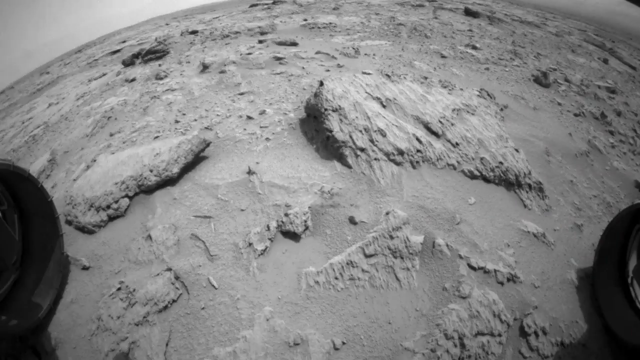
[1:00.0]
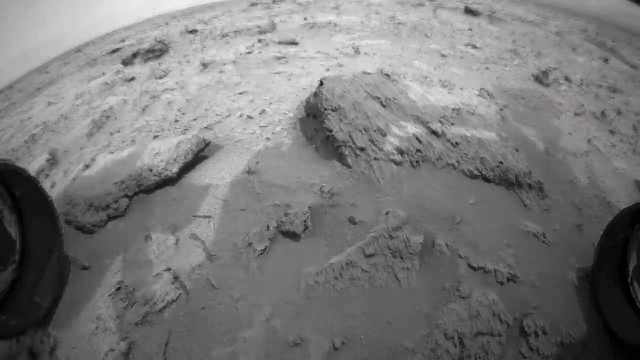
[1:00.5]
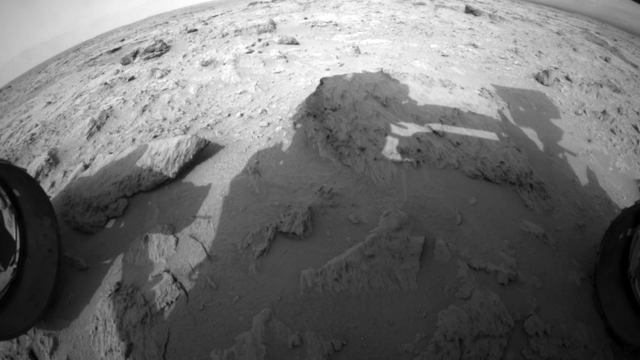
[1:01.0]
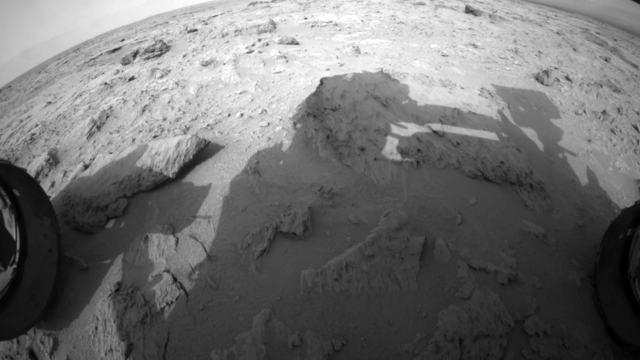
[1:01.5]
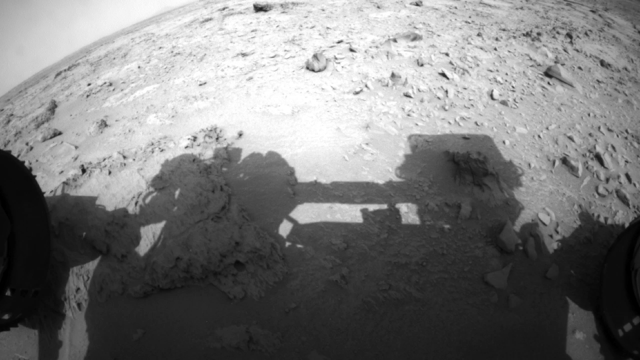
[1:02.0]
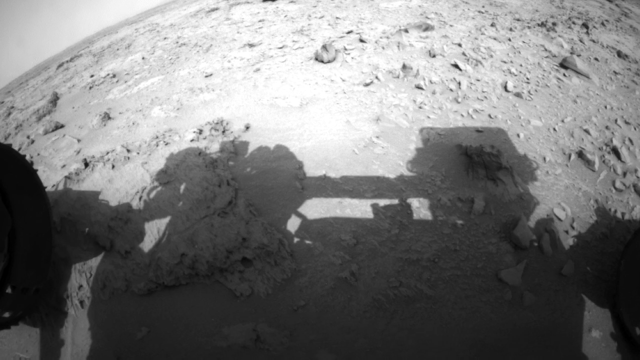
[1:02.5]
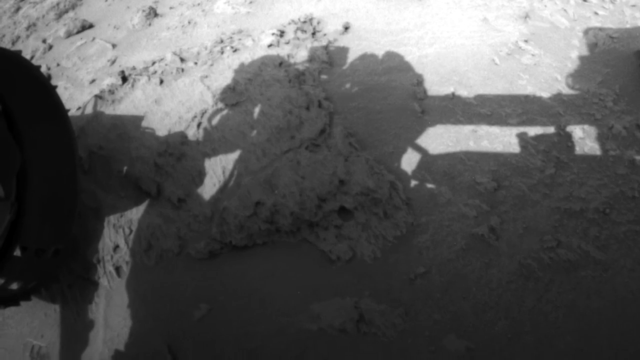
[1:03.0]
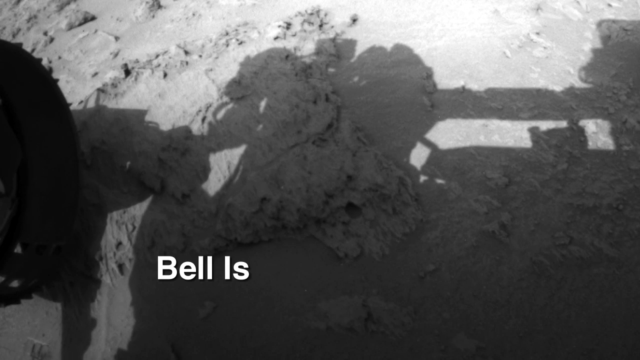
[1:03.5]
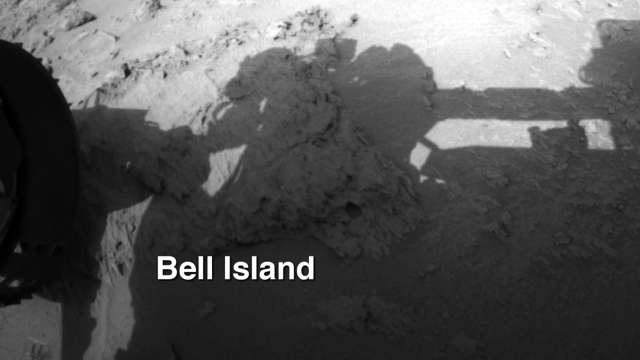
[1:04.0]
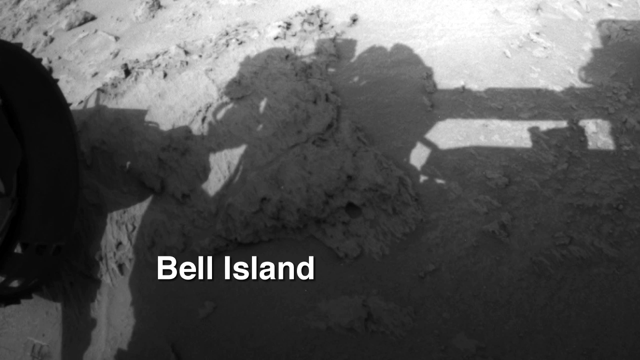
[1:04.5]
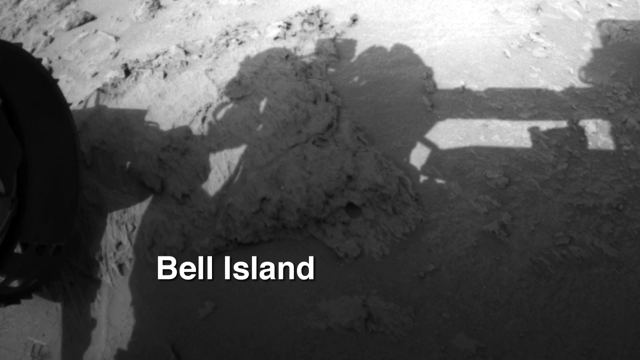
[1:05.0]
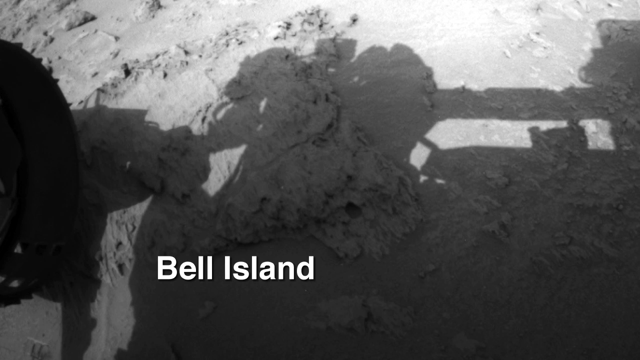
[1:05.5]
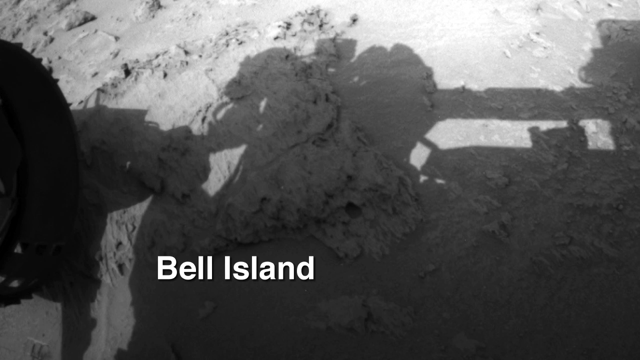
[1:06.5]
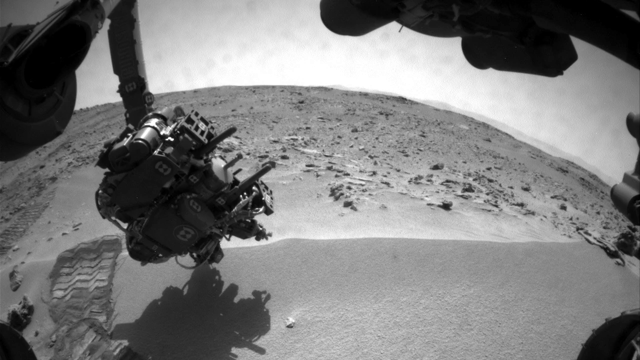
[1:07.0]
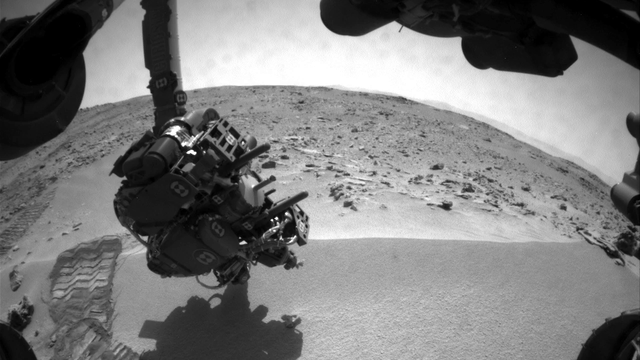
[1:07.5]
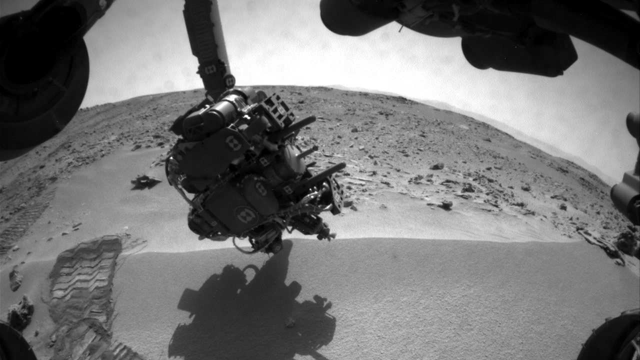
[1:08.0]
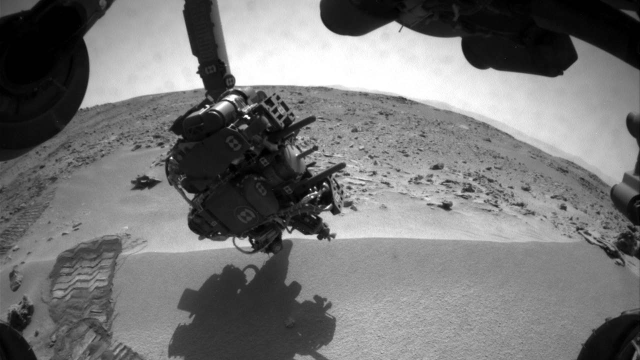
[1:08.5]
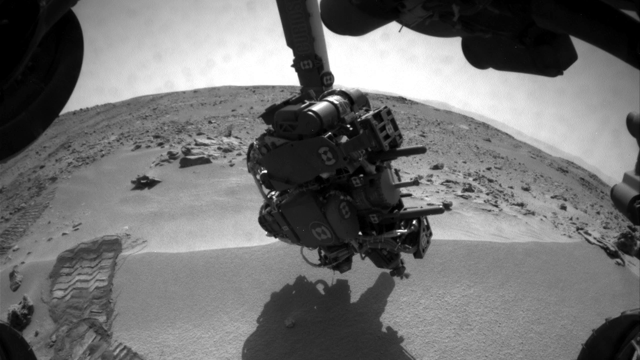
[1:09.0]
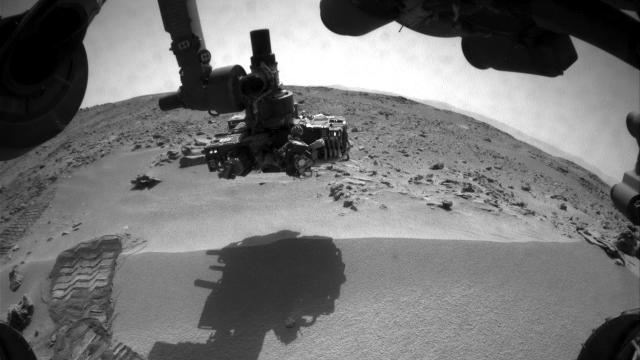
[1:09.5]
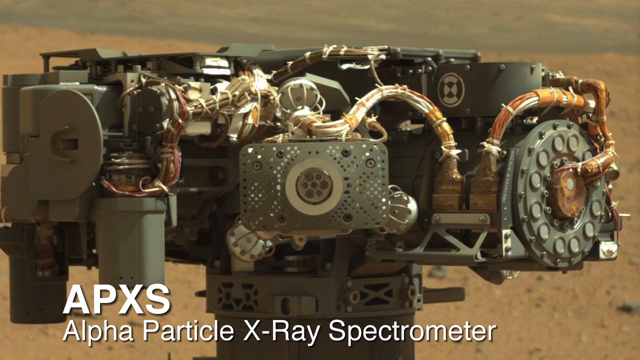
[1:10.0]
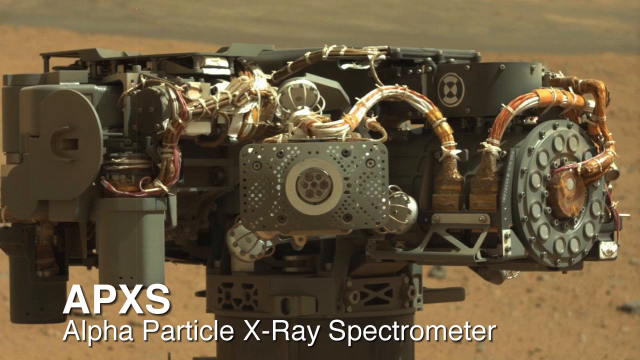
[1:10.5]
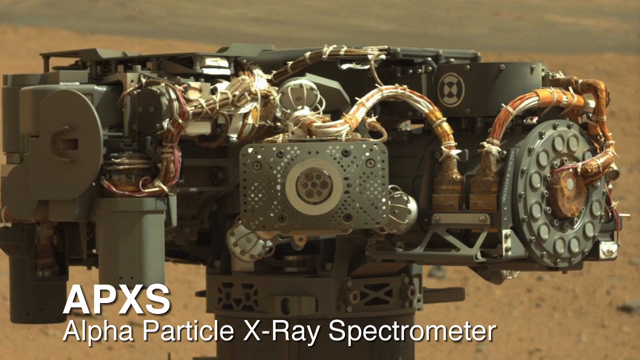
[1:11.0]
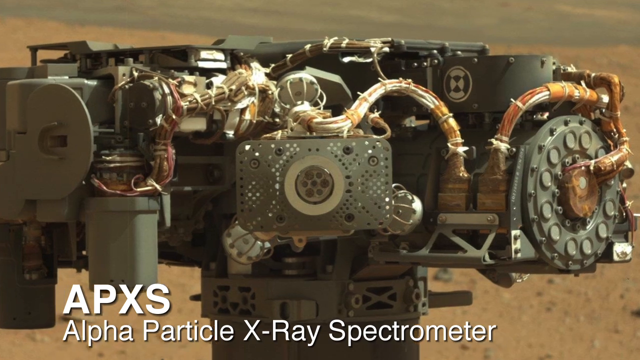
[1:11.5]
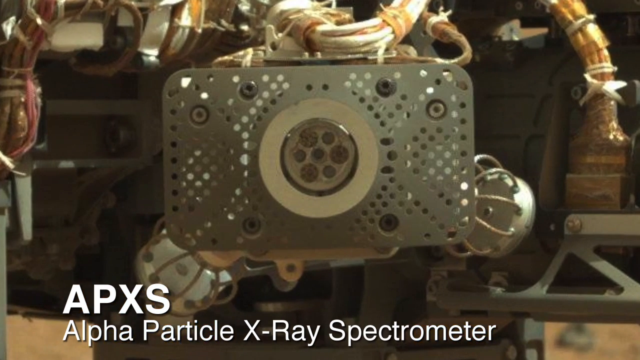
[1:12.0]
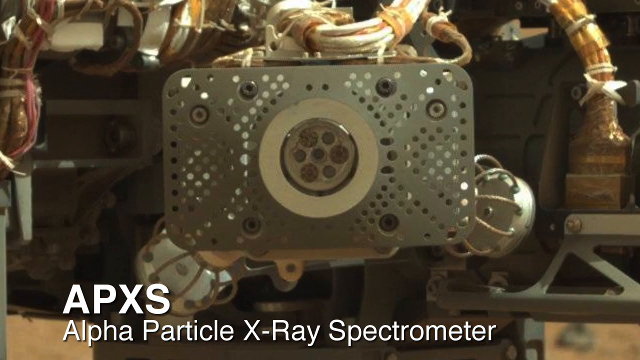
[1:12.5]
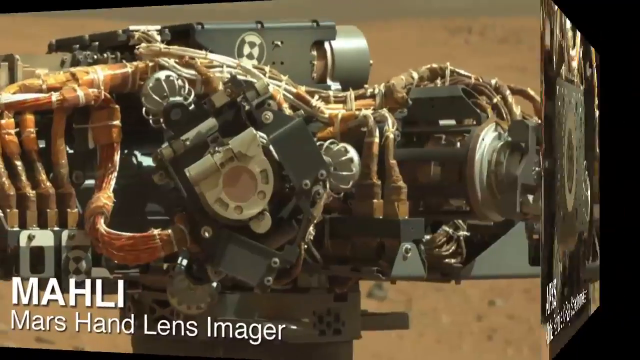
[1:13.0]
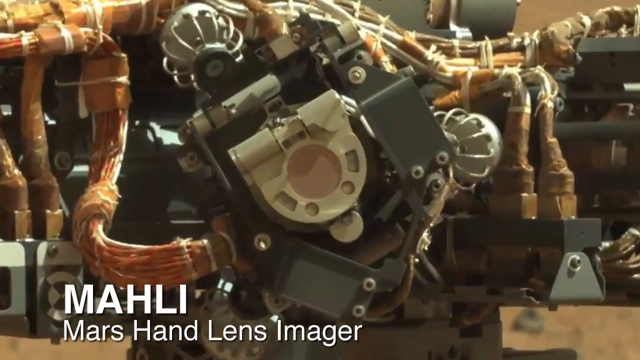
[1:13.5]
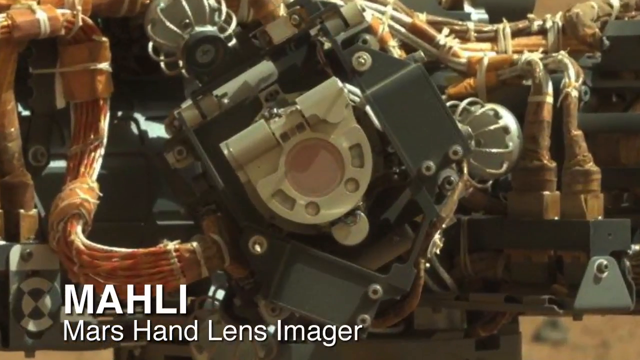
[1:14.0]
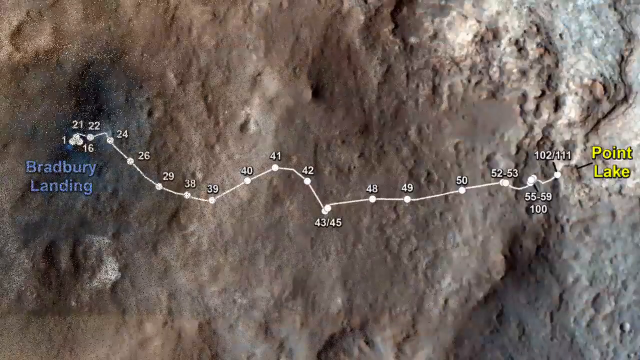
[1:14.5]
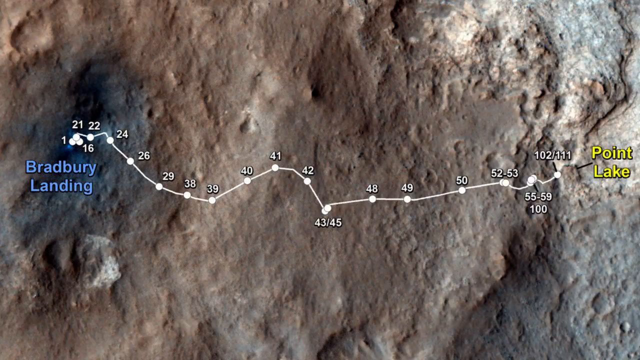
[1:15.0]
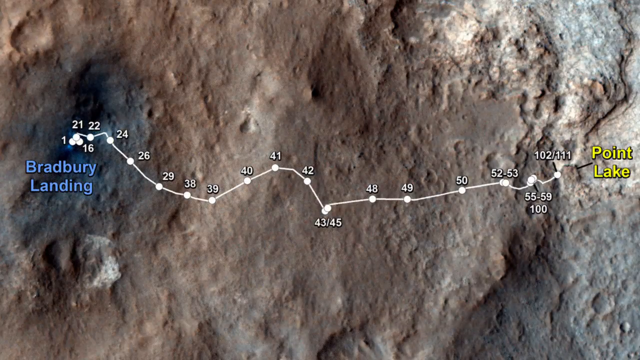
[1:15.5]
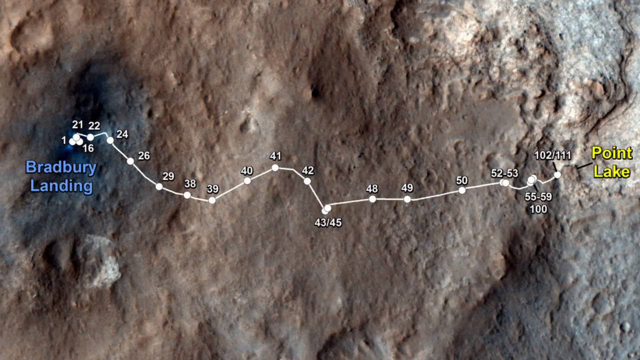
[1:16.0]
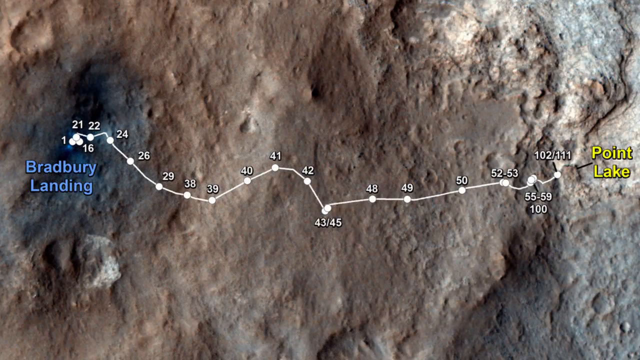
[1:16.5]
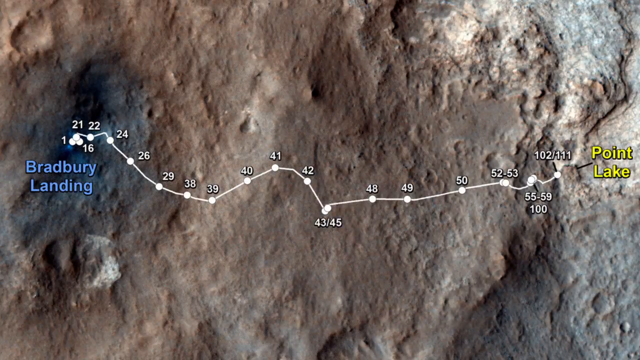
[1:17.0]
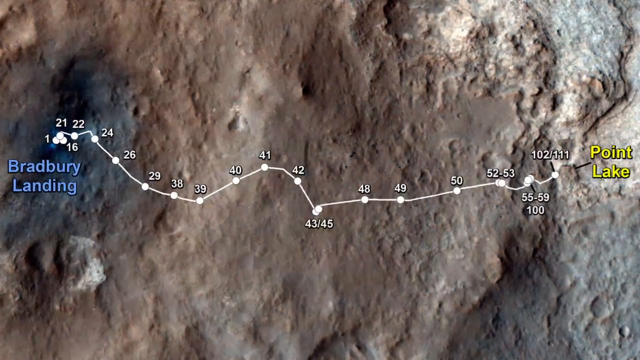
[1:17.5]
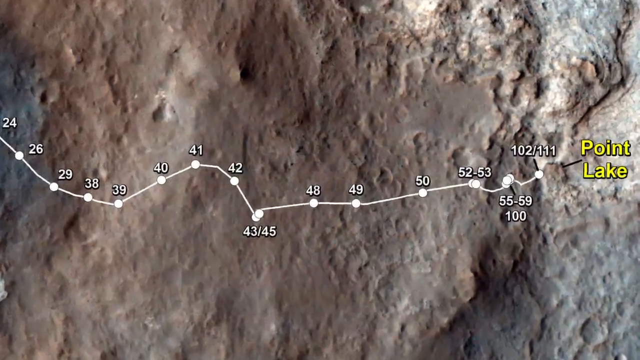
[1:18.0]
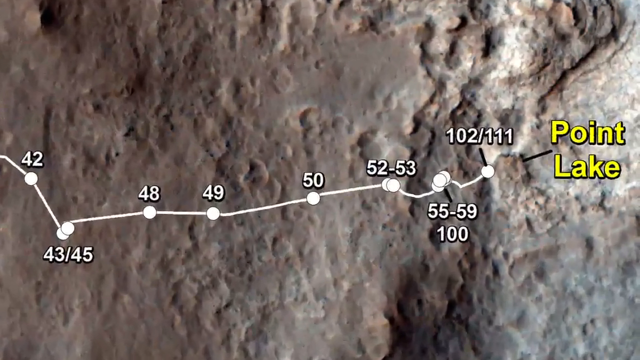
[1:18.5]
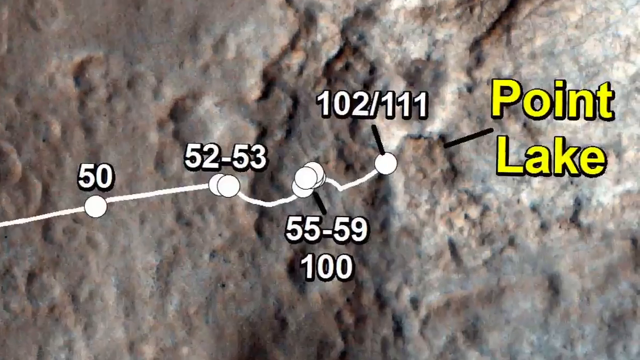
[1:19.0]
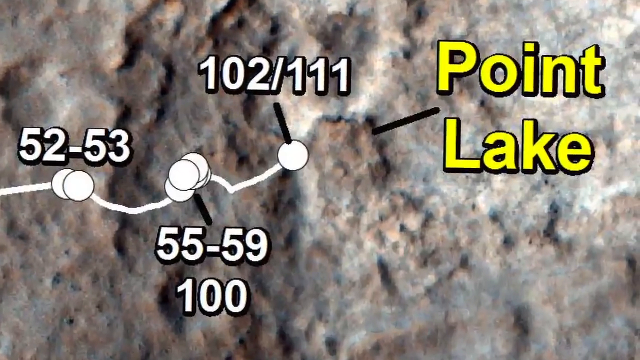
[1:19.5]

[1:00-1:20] The robot takes pictures. It is shown landing, and then moving along.